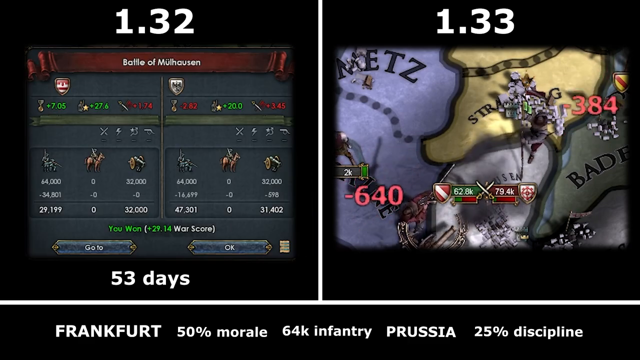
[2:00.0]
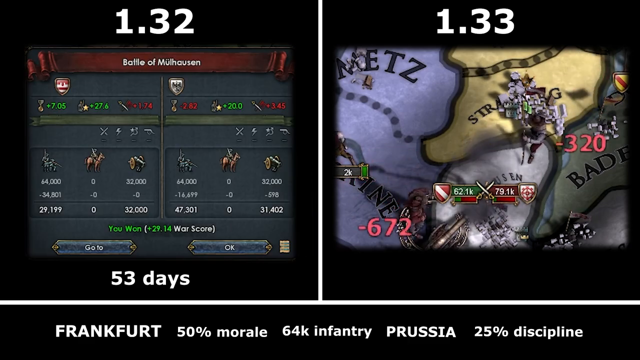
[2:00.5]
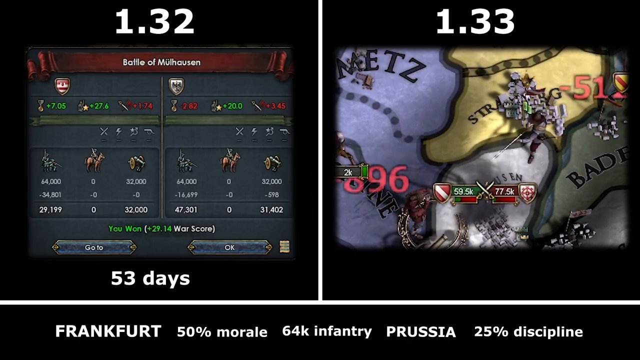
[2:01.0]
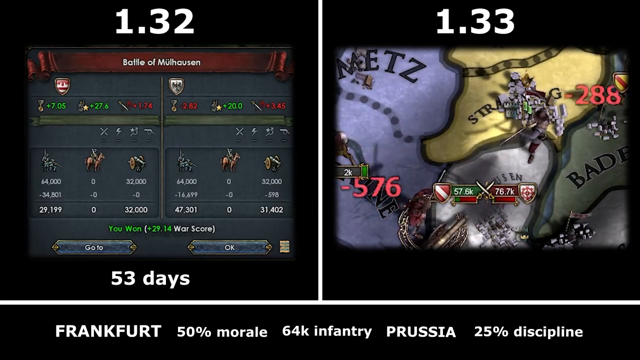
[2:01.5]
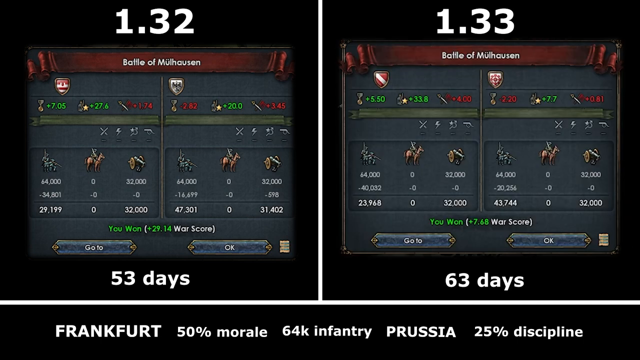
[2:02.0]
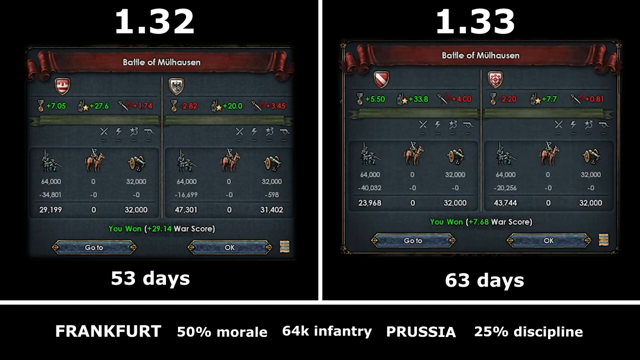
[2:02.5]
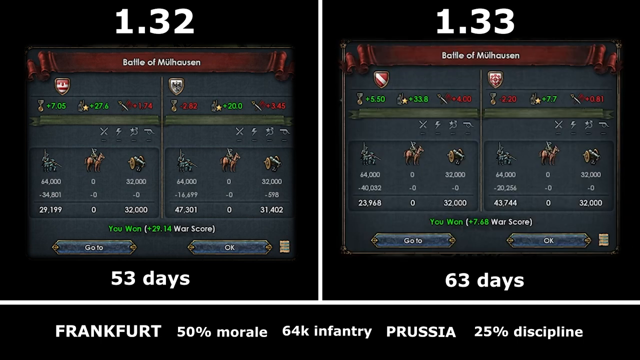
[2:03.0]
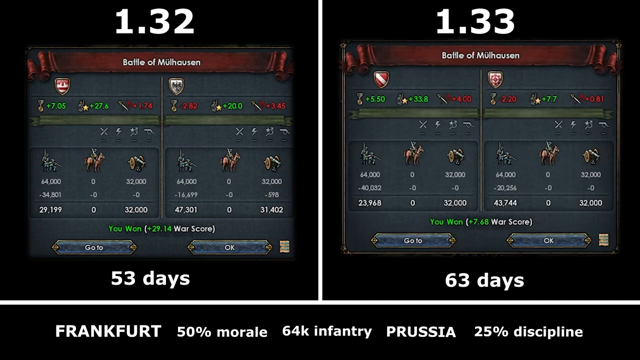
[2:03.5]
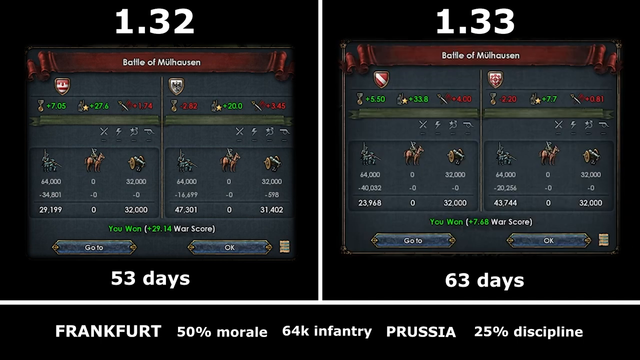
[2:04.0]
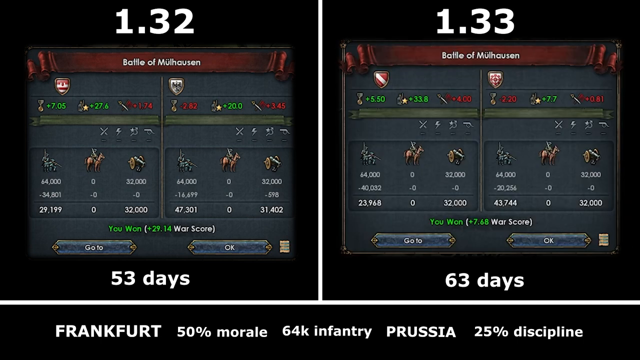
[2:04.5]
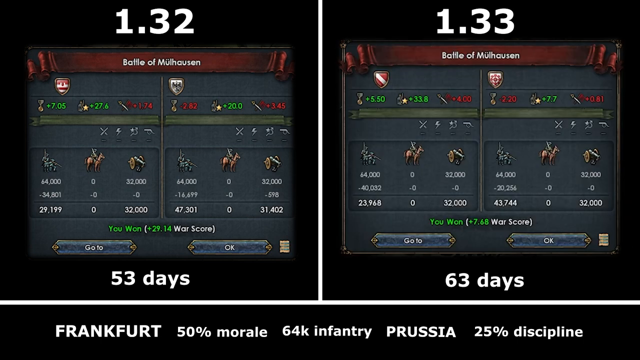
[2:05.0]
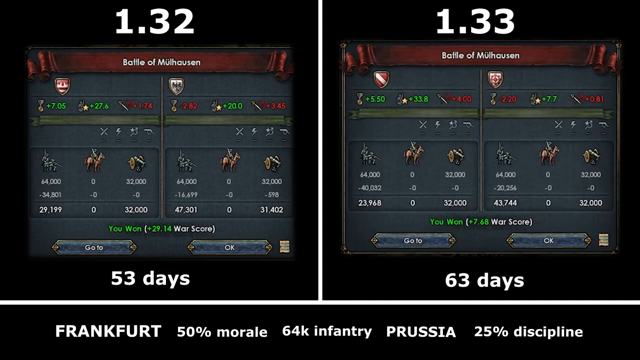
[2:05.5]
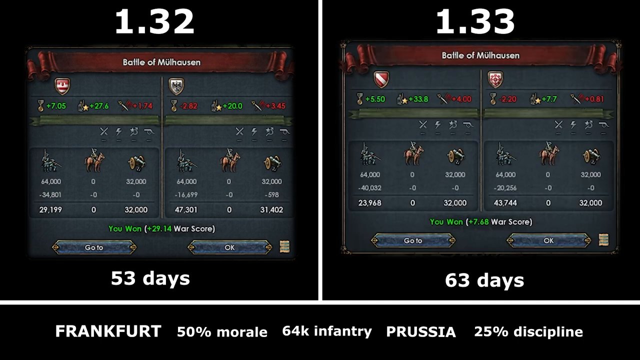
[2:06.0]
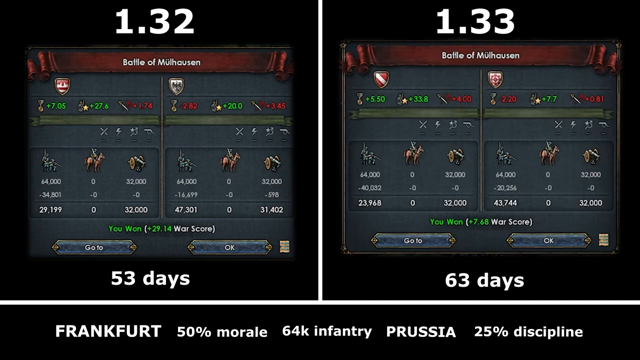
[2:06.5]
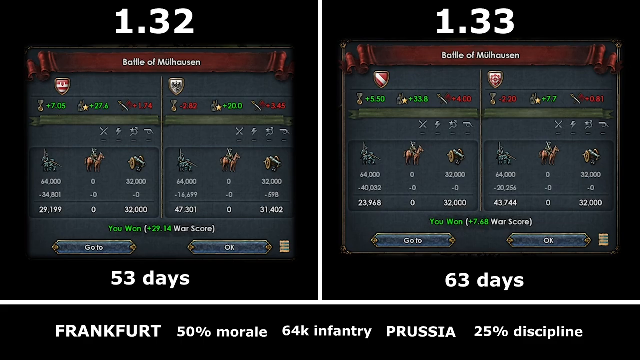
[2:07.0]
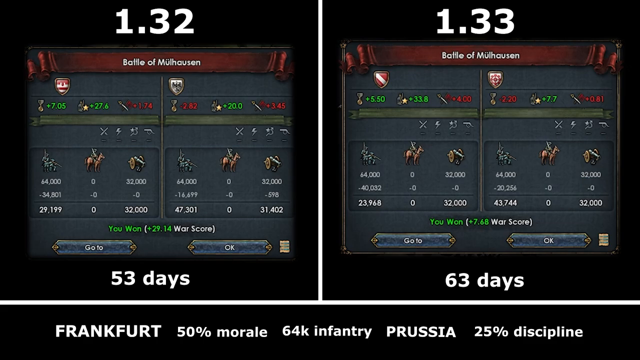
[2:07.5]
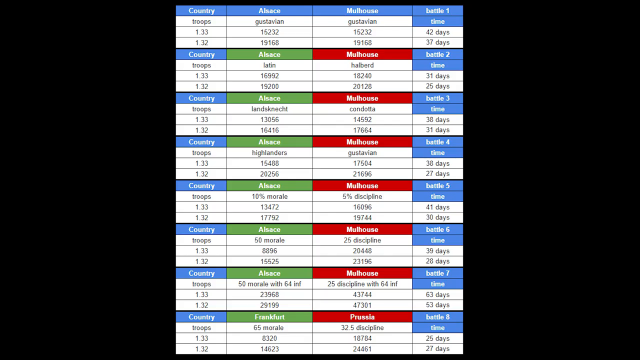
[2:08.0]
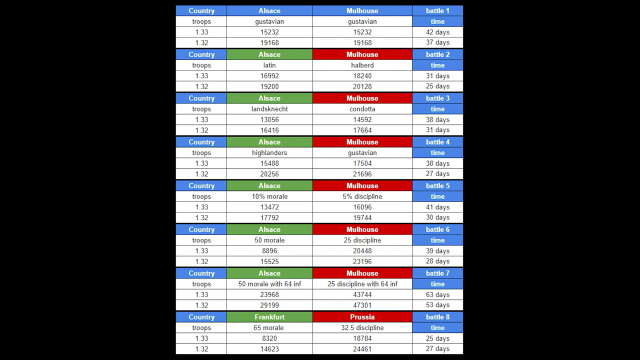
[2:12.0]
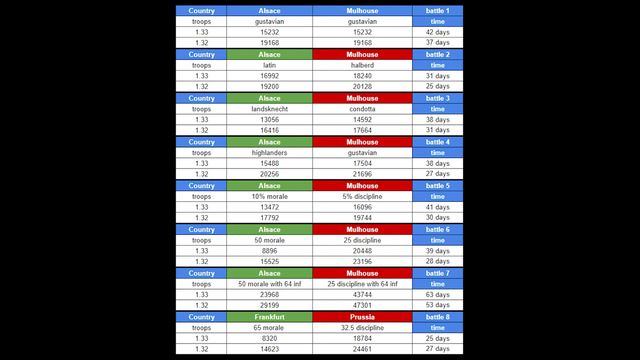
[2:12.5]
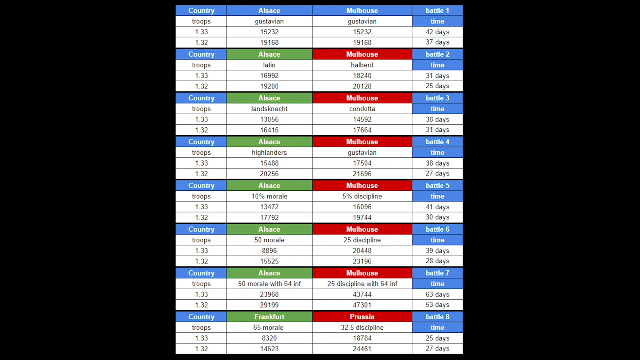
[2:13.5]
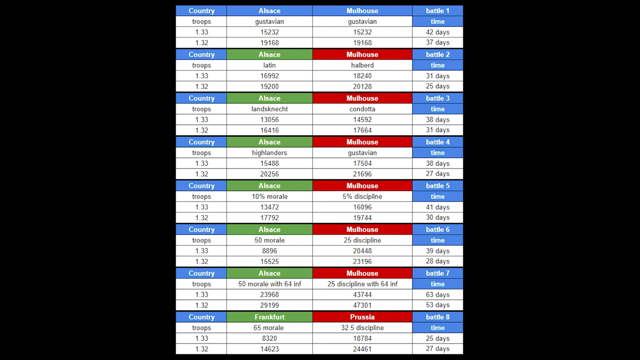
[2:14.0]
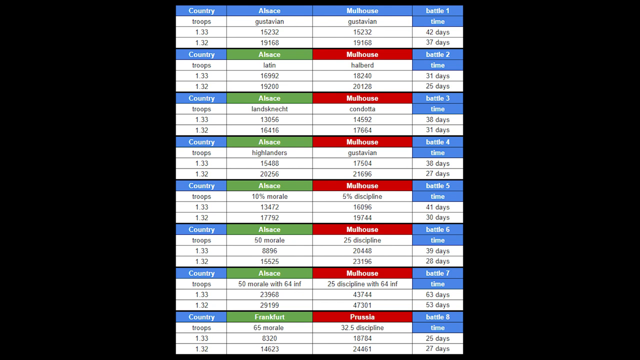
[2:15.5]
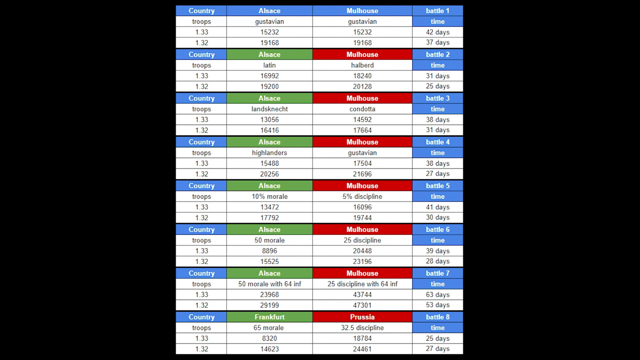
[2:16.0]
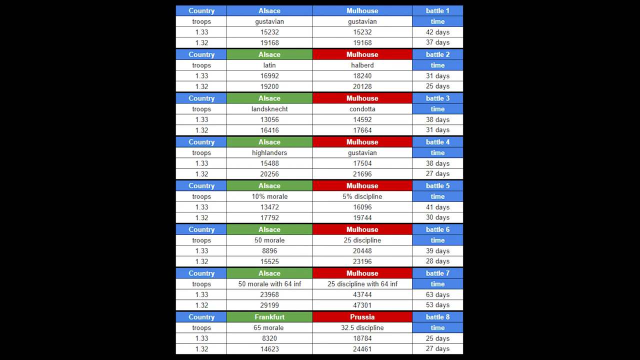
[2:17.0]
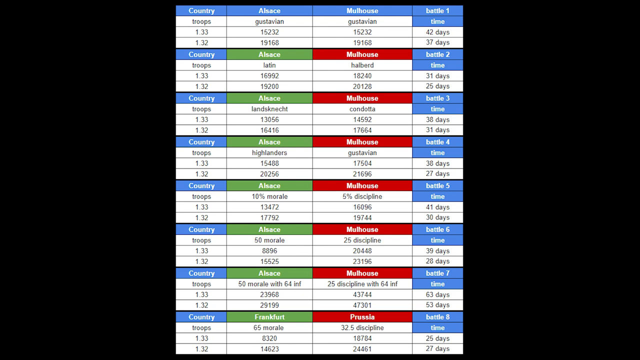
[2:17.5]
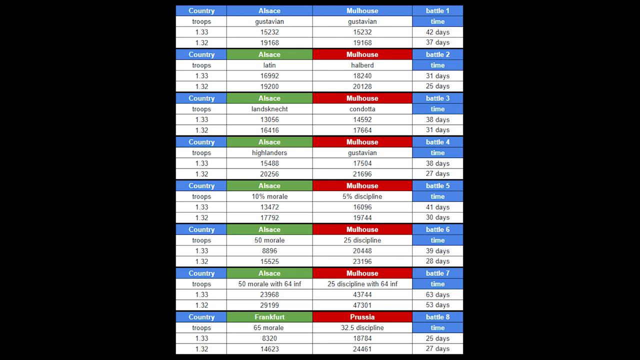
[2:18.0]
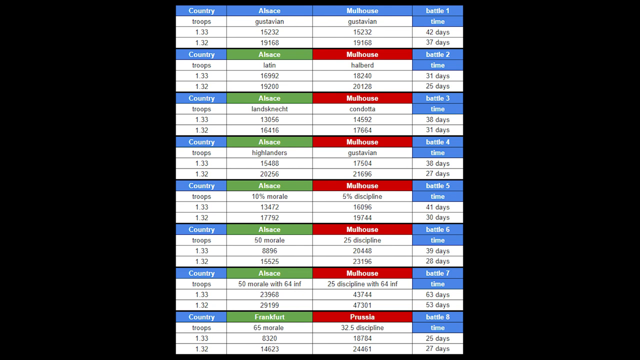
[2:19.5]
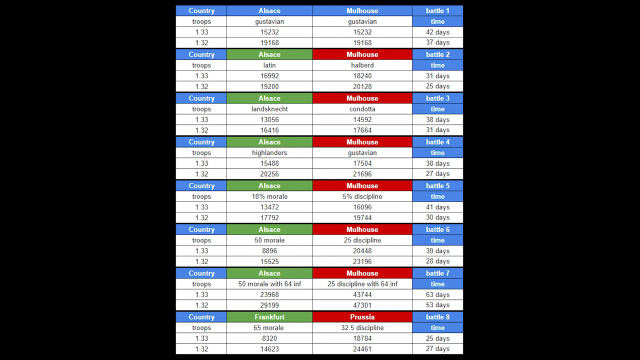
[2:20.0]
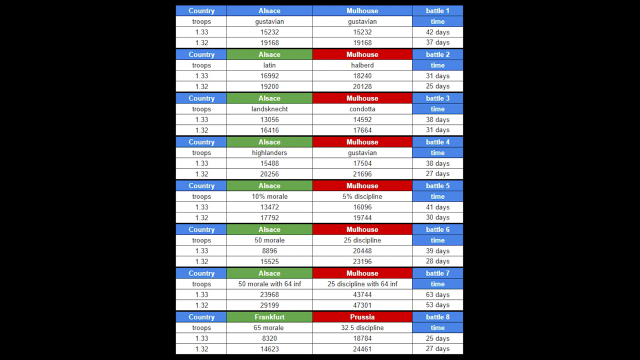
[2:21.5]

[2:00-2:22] The stats page returns with 53 days on the left and 63 days on the right, with Frankfurt and Prussia still at the bottom. The screen then changes to a table in the center of the screen with four columns: "Country," "Alsace," "Mulhouse," and a last column of battles numbered 1 to 8. Each column is filled with numbers, presumably summarizing the statistics shown earlier, including the days. The country and battle columns are highlighted in blue, and the place columns are highlighted in green and red.